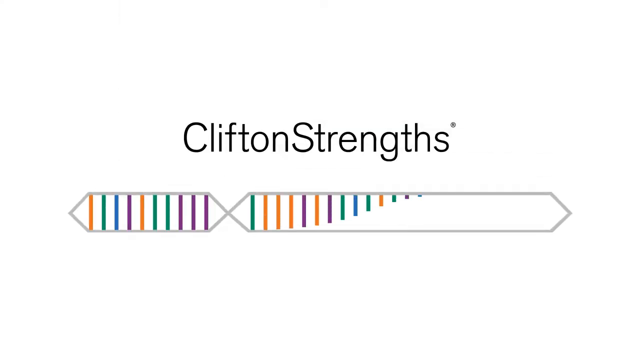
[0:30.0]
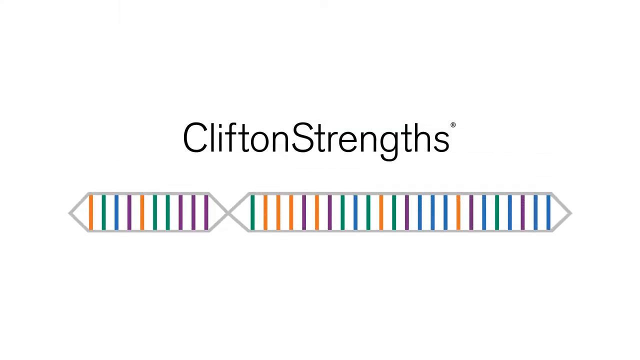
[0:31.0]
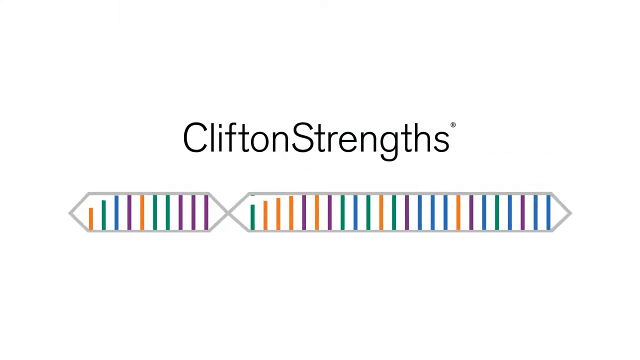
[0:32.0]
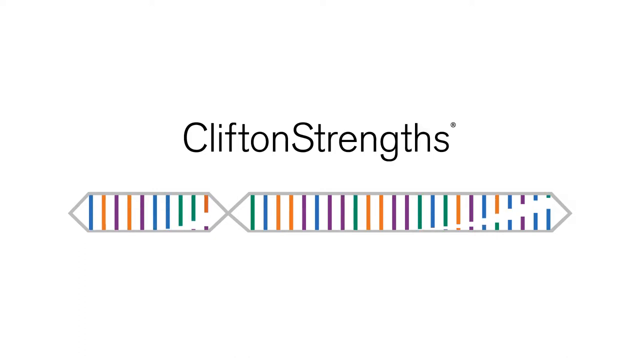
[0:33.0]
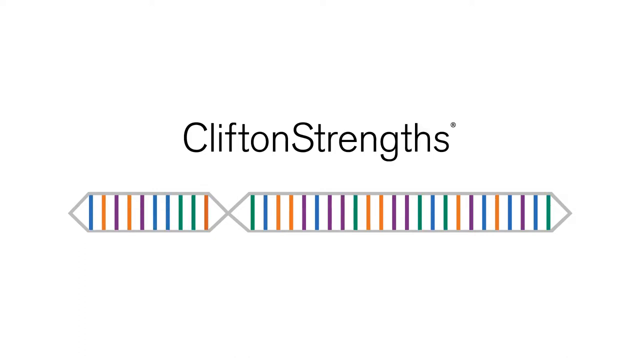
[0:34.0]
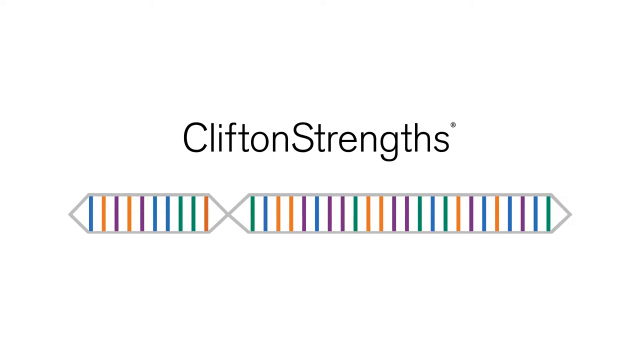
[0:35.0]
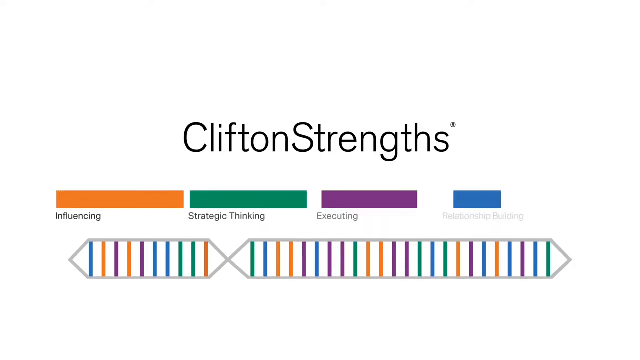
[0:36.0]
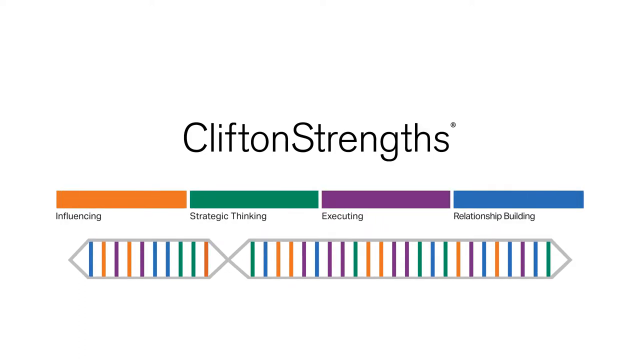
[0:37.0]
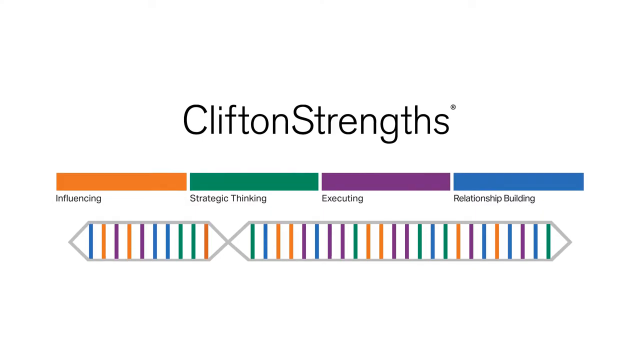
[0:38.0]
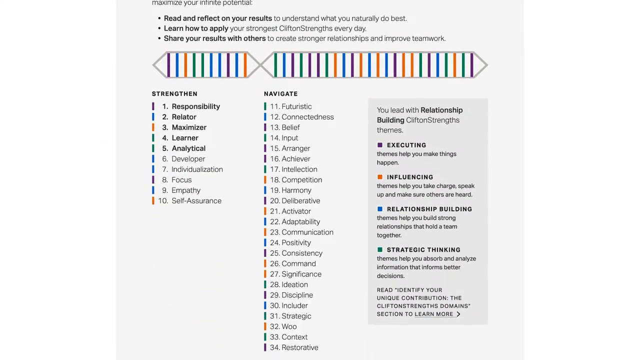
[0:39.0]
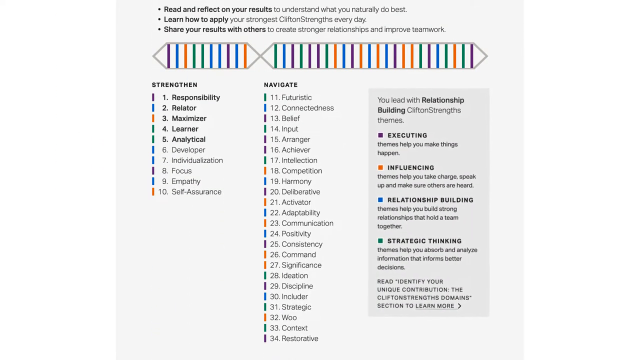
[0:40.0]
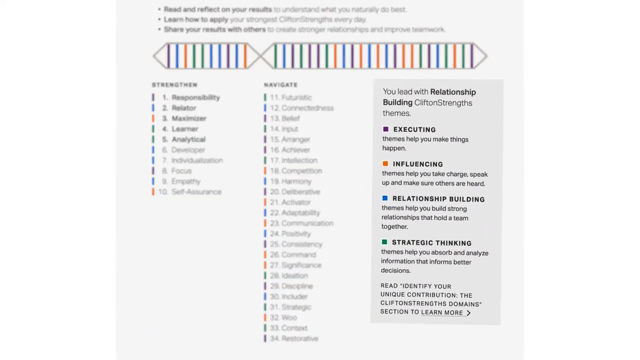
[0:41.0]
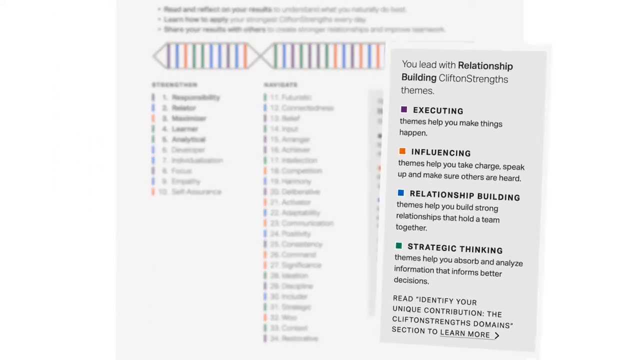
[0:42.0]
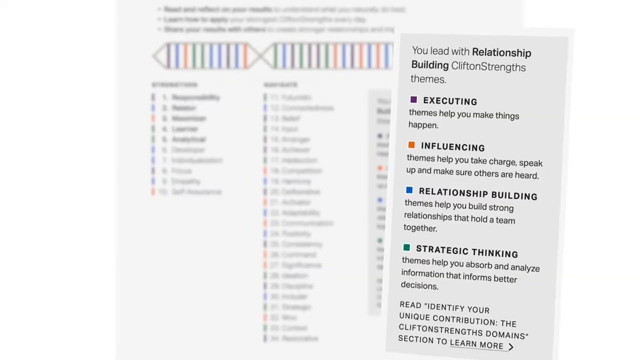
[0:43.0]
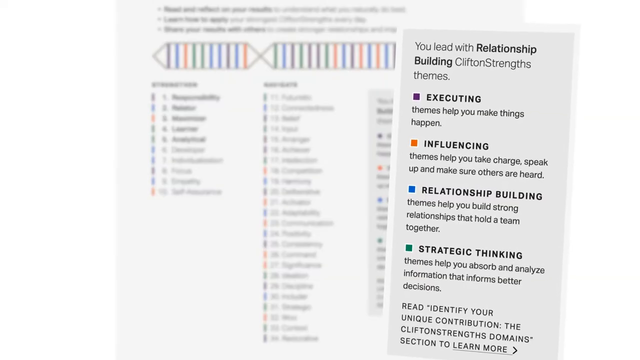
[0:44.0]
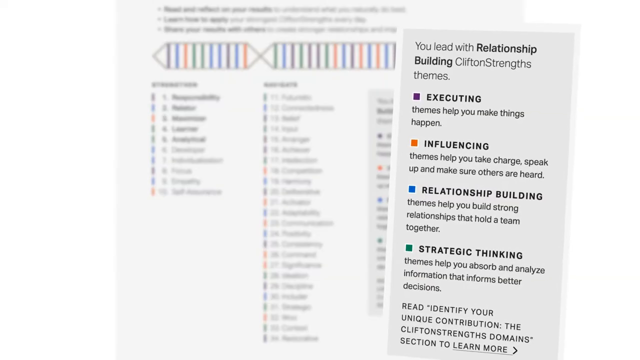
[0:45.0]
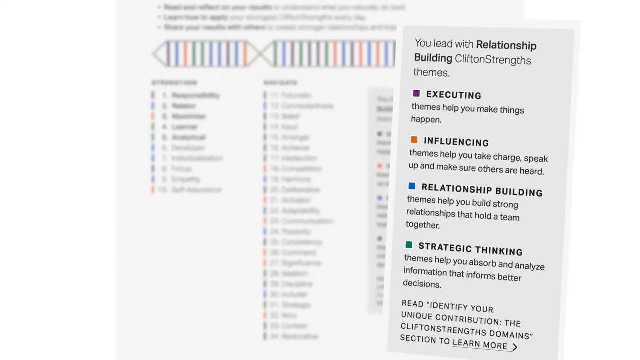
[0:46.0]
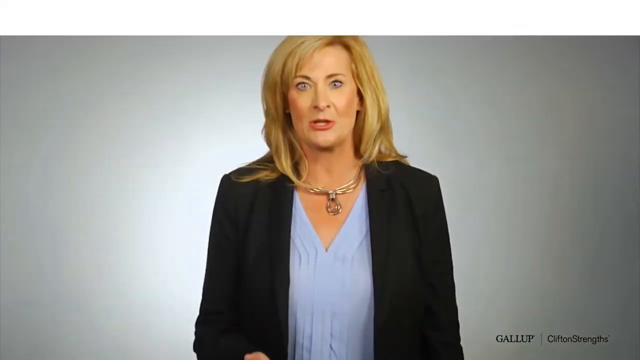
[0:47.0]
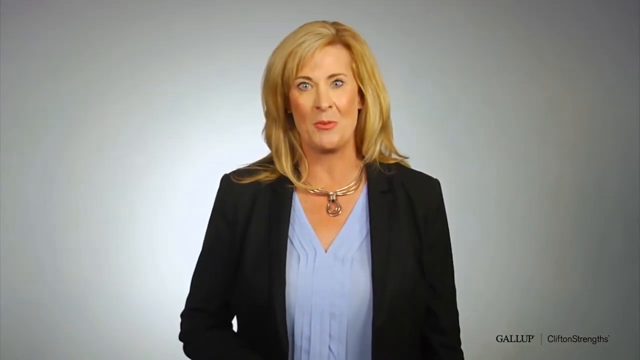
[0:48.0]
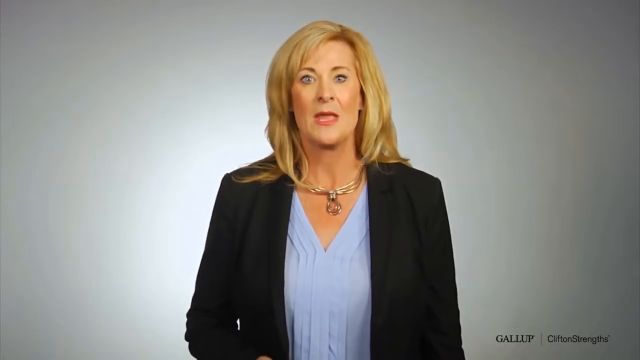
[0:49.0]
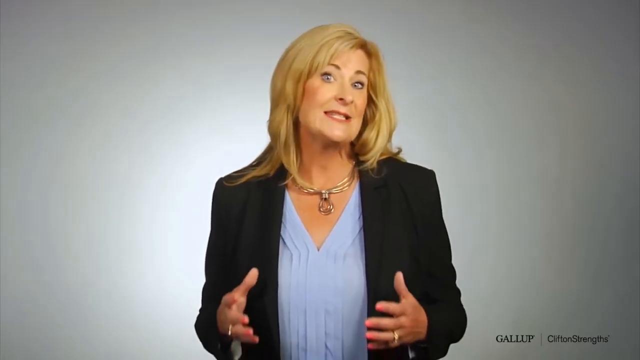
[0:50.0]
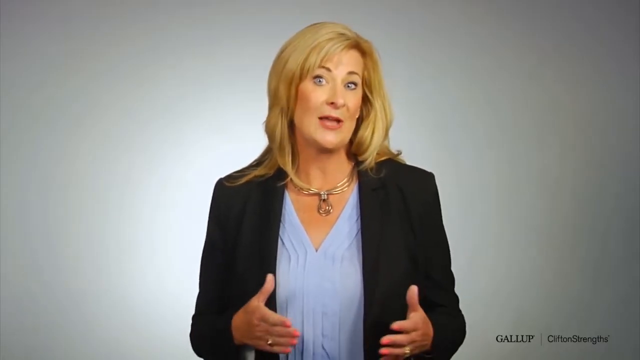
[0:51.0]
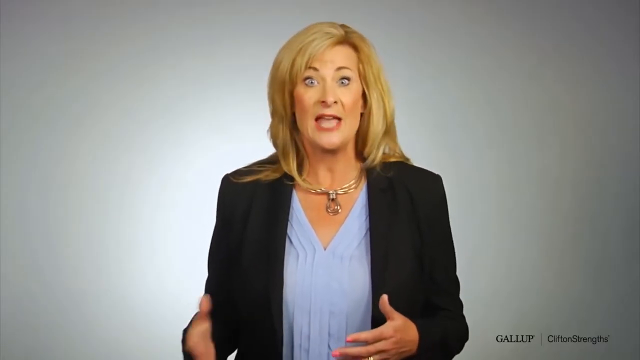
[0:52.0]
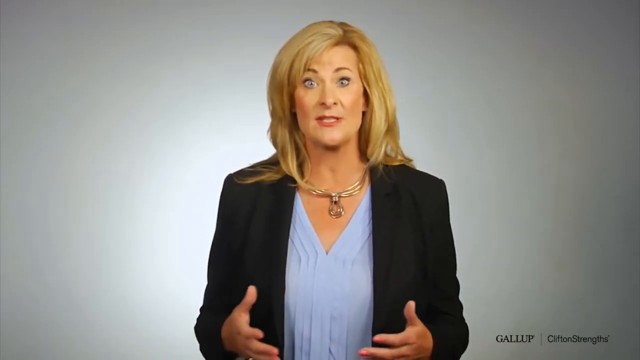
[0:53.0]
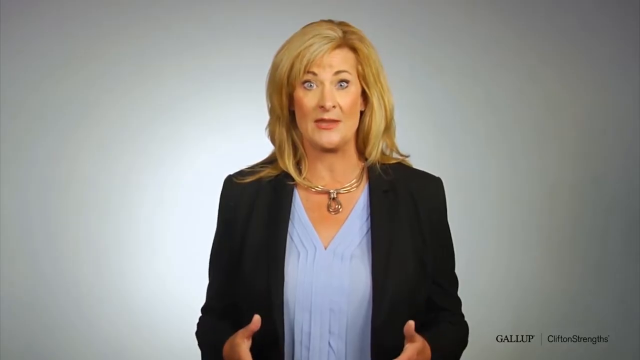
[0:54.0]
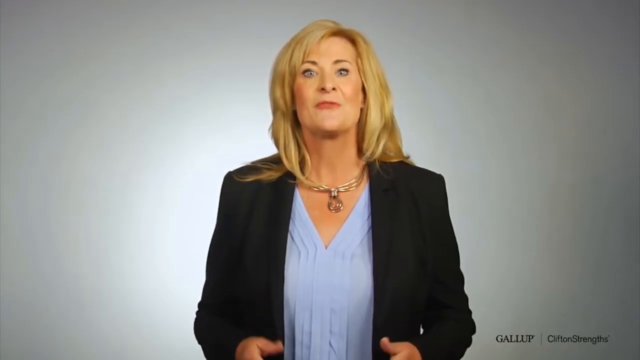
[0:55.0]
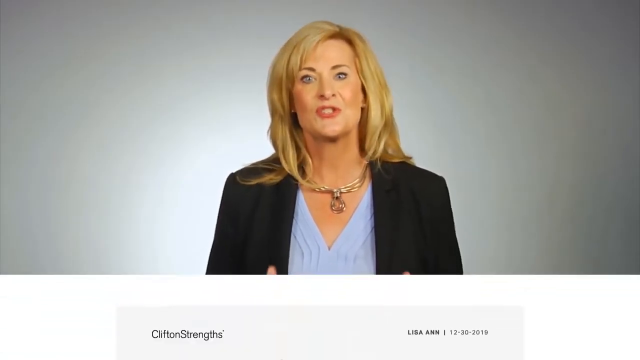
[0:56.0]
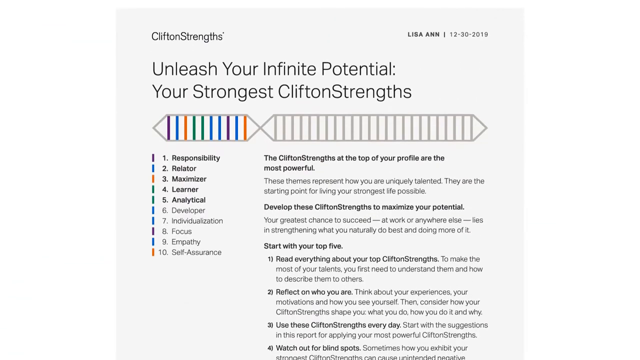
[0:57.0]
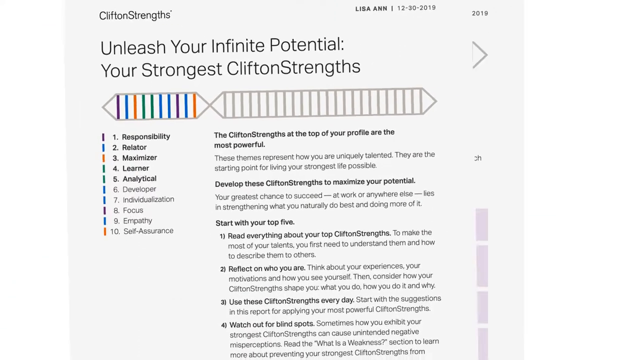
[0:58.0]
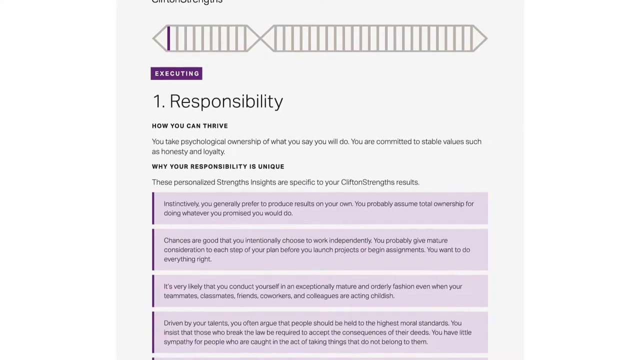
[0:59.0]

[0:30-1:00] The CliftonStrengths heading and the DNA-like strand beneath it are shown, then the words and the strand separate, and four characteristics appear between them: "Influencing" in orange, "Strategic Thinking" in green, "Executing" in purple and "Relationship Building" in blue. The view then returns to the breakdown sheet showing what each of these means, and then back to the woman talking. A Gallup logo is in the bottom right-hand corner. The text on the paper is hard to read. The sheet explaining the four strengths reads "You lead with Relationship Building Clifton Strength themes"; these seem to be the four themes that the other traits break down into.